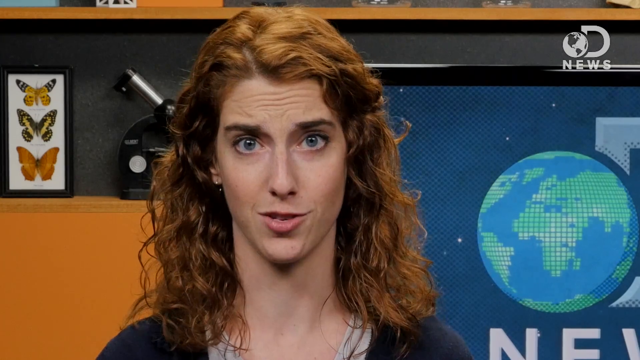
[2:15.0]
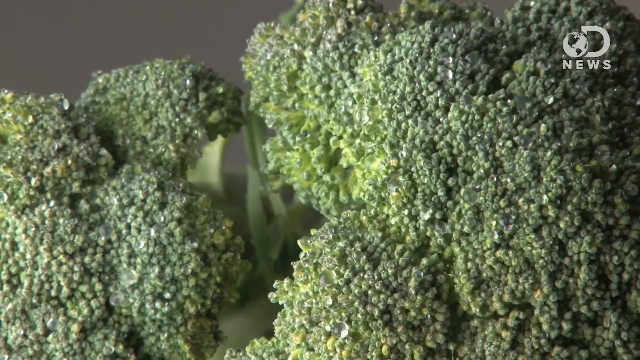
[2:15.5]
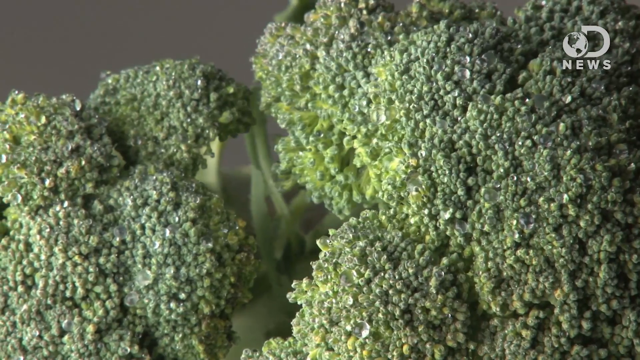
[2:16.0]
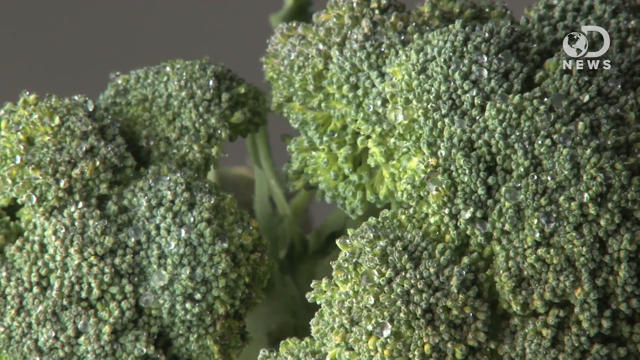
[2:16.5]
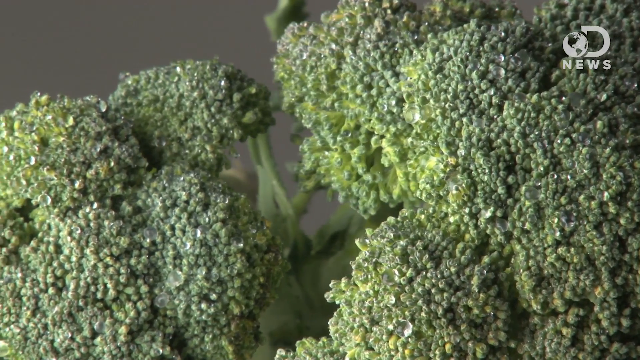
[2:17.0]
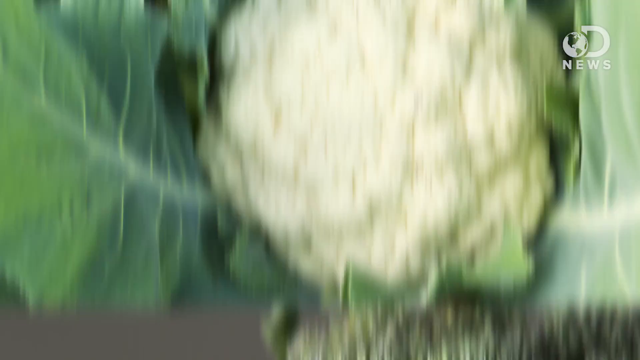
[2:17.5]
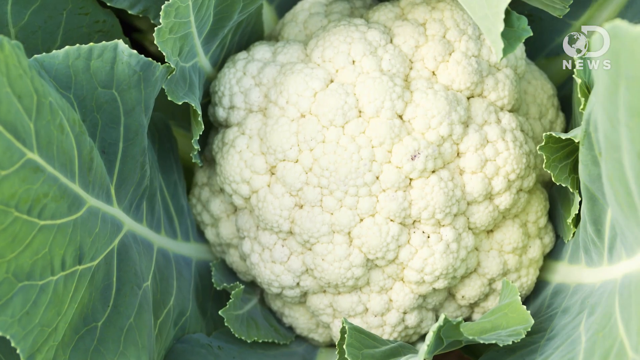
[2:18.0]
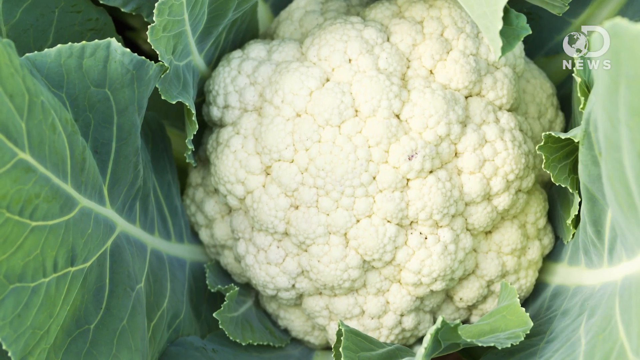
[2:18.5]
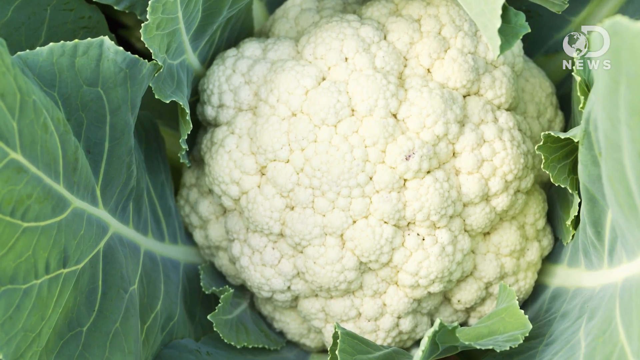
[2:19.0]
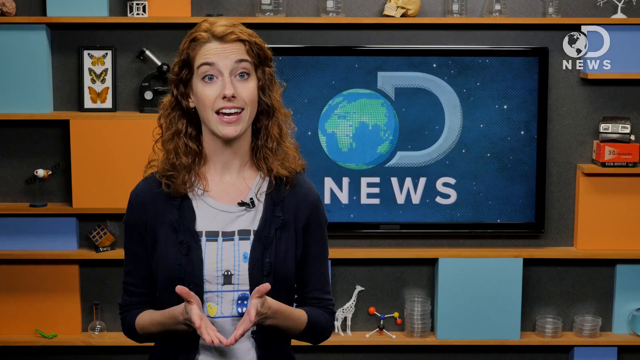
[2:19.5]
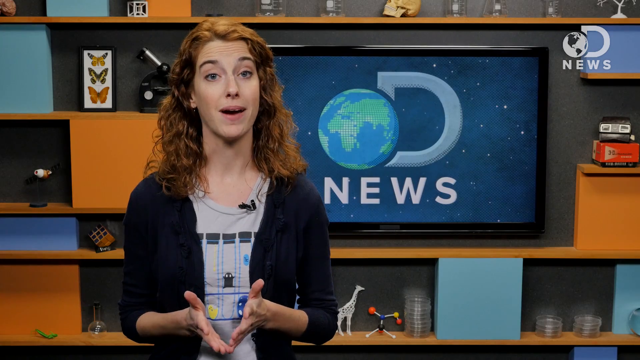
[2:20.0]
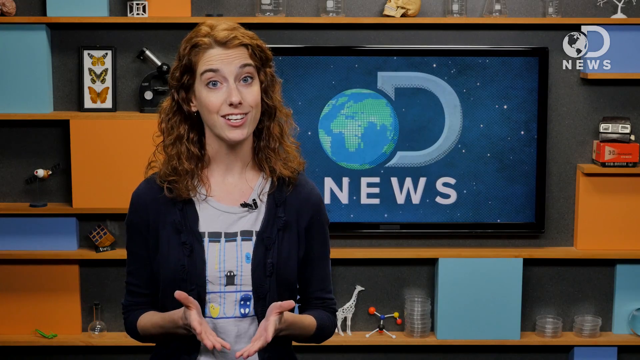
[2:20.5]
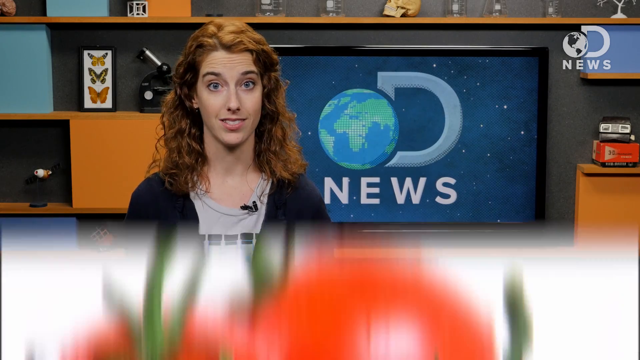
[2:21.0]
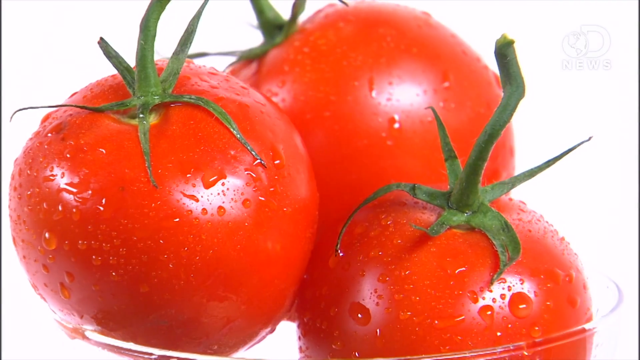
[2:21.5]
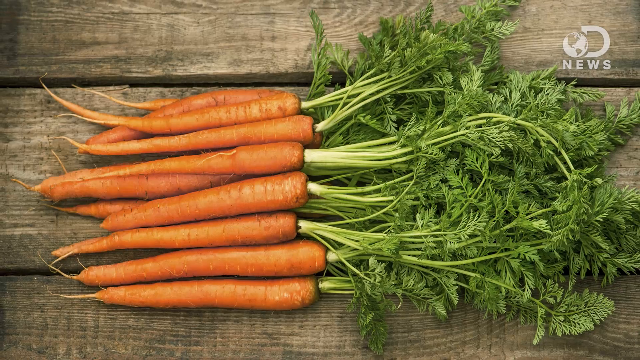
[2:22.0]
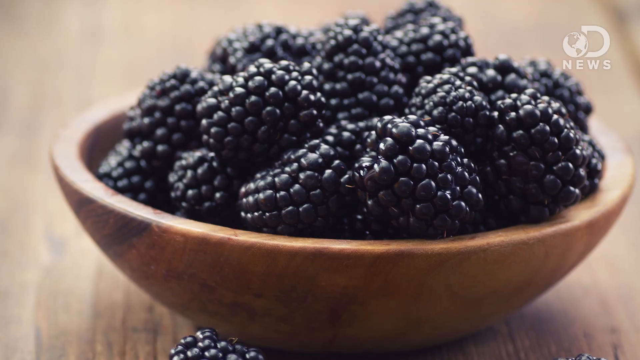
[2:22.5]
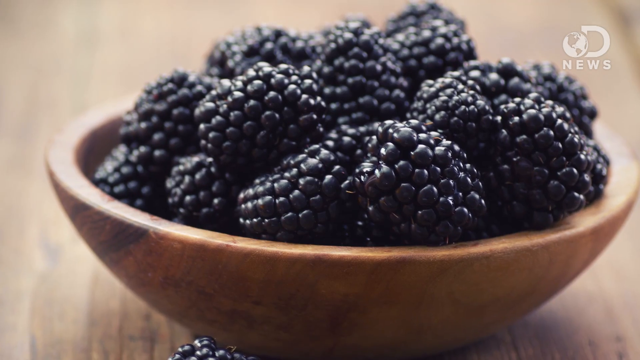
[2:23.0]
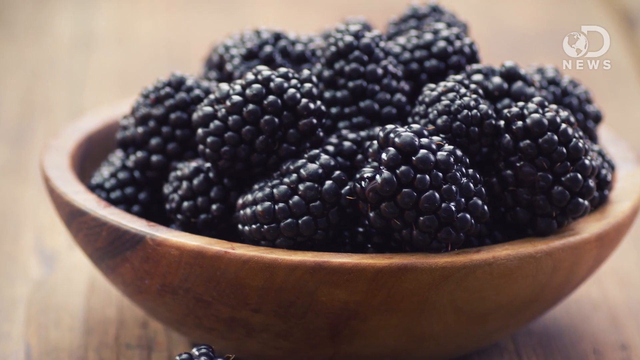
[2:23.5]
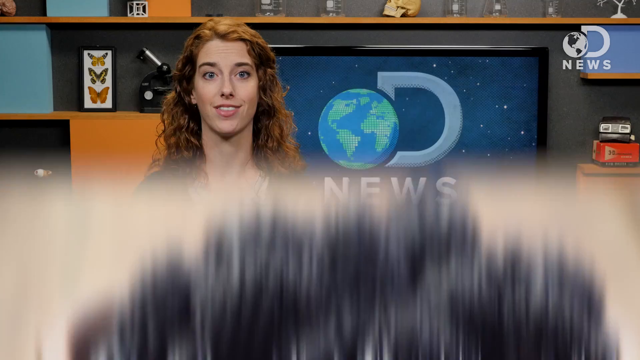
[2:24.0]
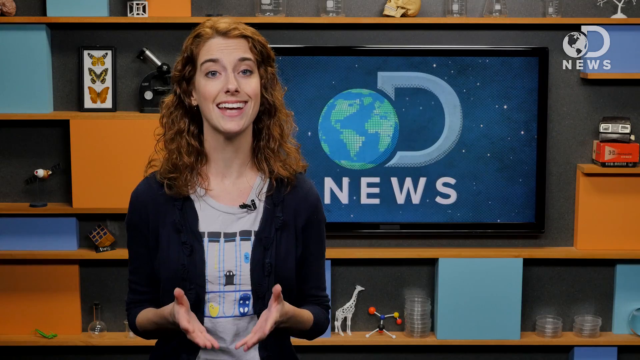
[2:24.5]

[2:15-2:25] The young white woman with red hair and blue eyes is shown briefly speaking in the studio before the video cuts to a large close-up of what appears to be a pile of broccoli florets, with the camera kind of spinning around them before reversing to an image of what appears to be cauliflower. The camera then pans back to the woman, who is standing in the studio speaking to the camera. After a brief moment on her face, different fruits are shown one by one, including a close-up of a bowl of blackberries and some other fruit. A plate of carrots and a bowl of tomatoes can also be seen.